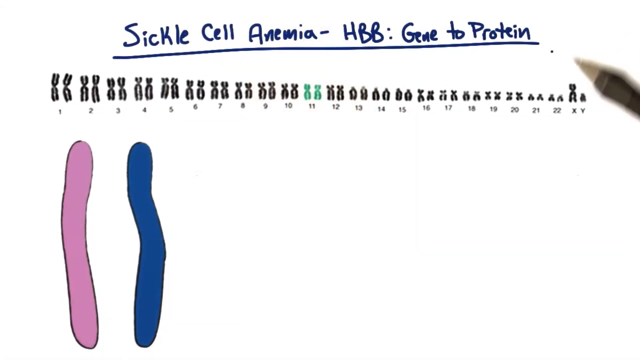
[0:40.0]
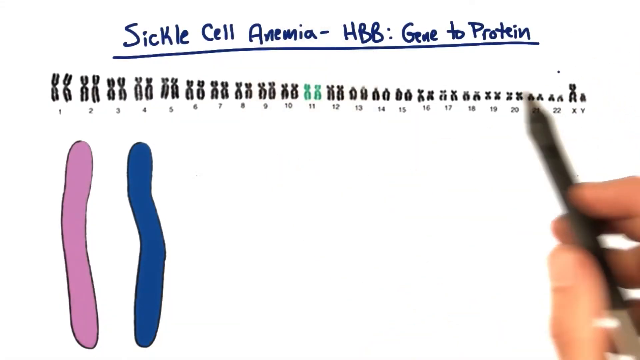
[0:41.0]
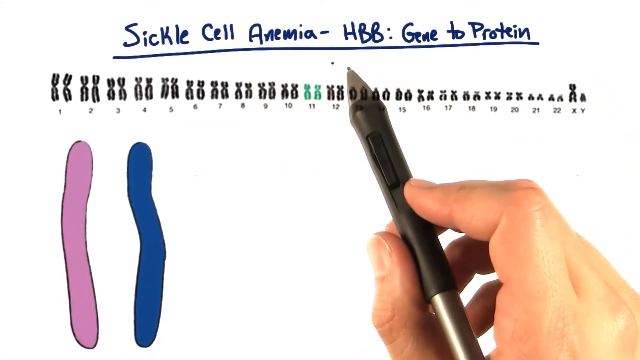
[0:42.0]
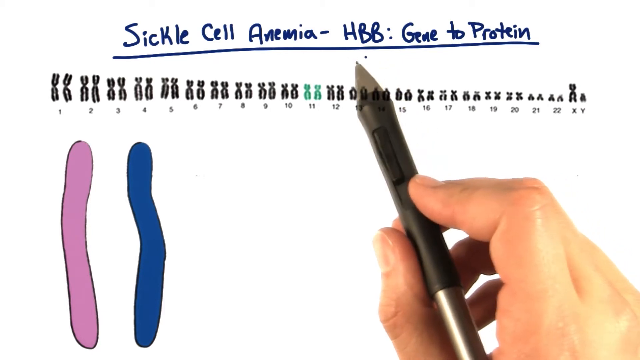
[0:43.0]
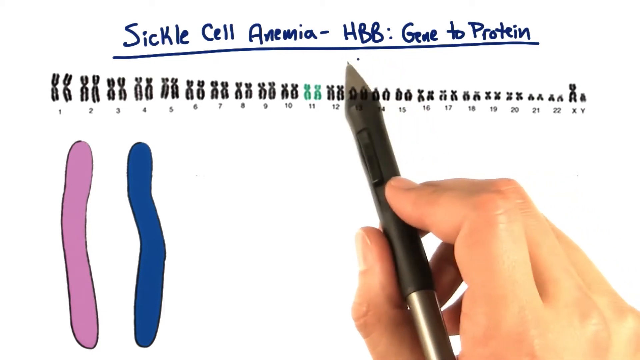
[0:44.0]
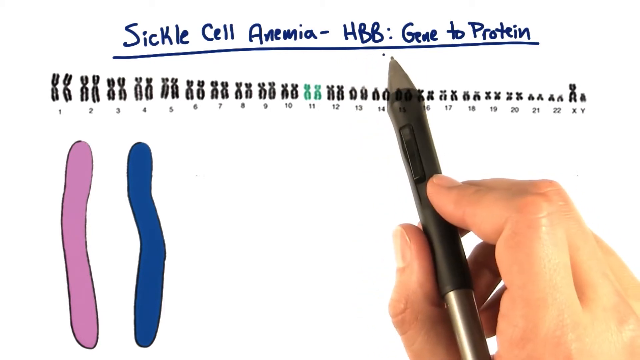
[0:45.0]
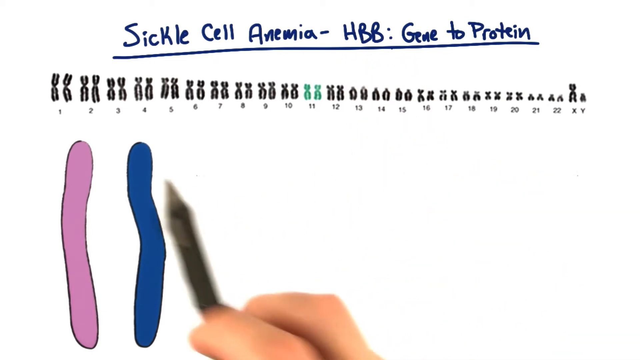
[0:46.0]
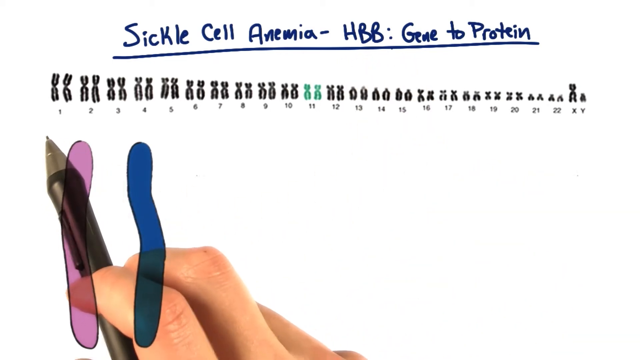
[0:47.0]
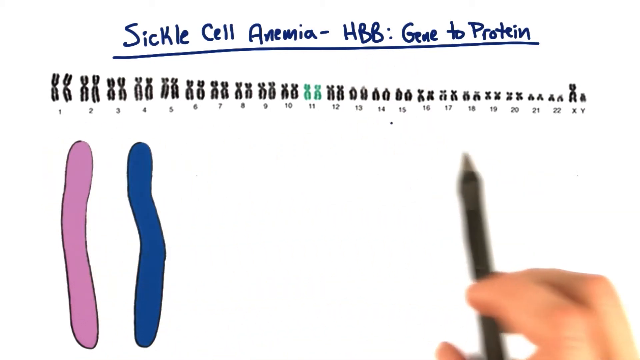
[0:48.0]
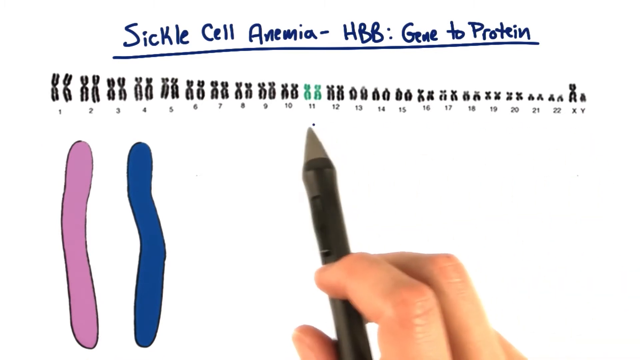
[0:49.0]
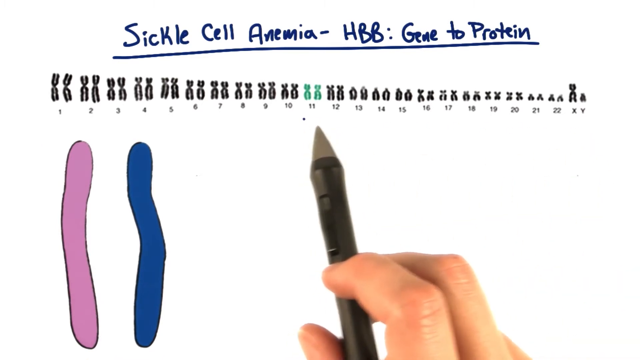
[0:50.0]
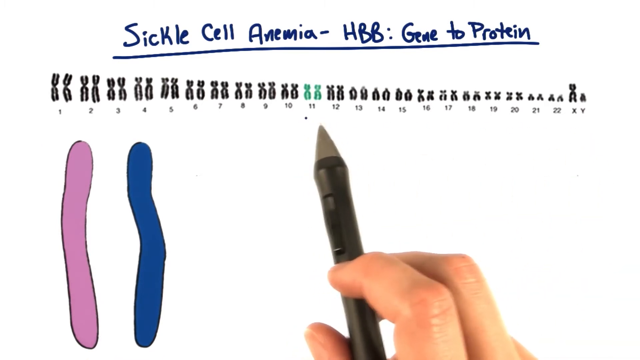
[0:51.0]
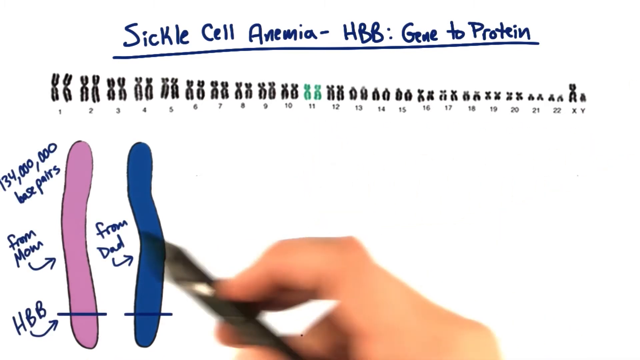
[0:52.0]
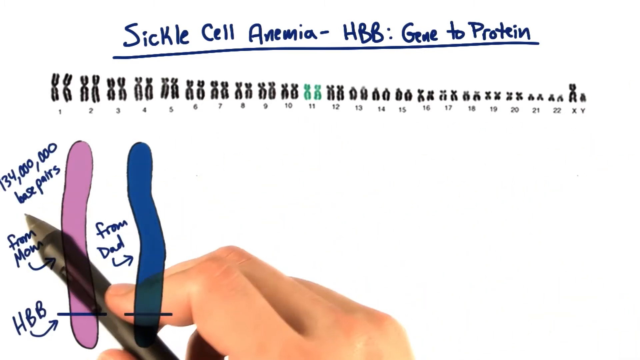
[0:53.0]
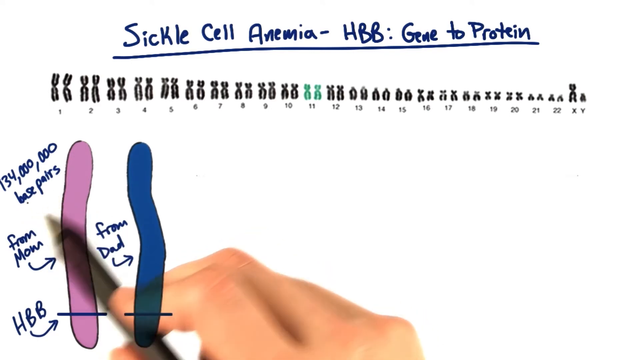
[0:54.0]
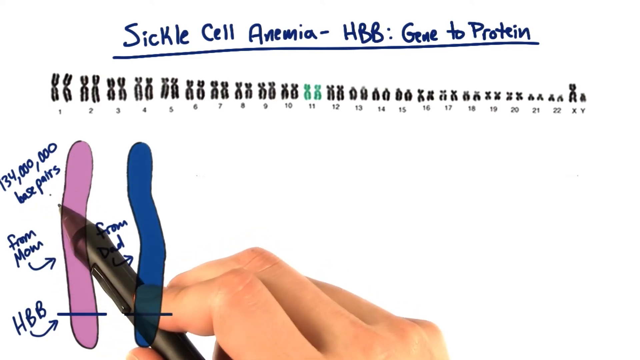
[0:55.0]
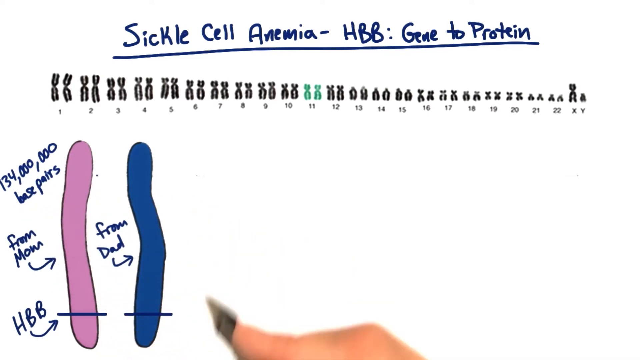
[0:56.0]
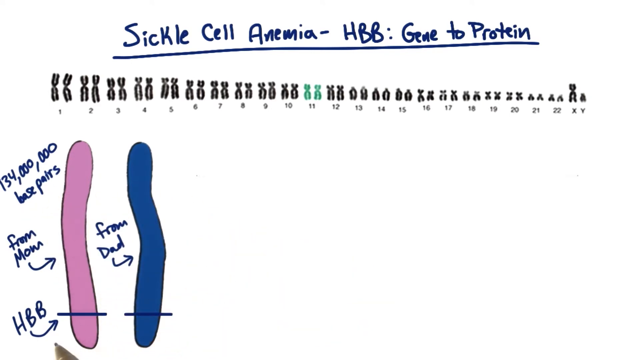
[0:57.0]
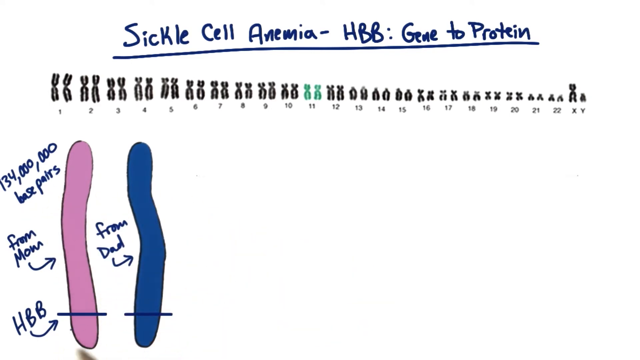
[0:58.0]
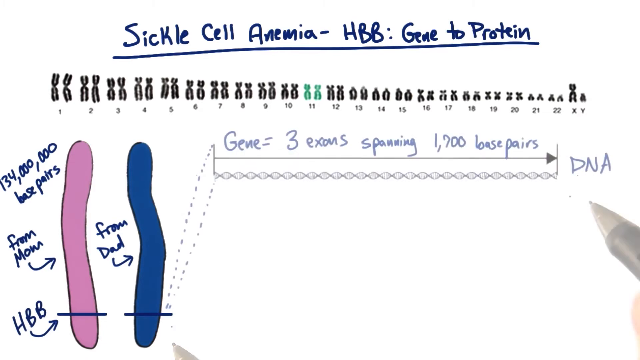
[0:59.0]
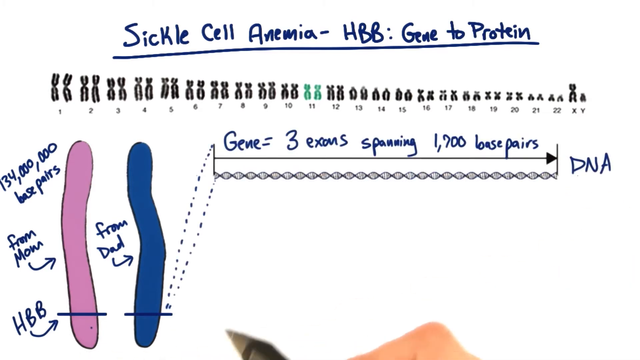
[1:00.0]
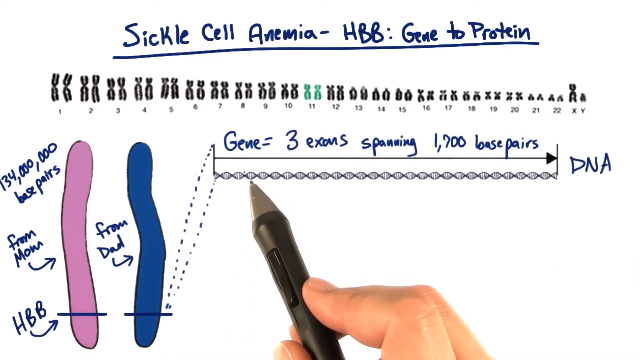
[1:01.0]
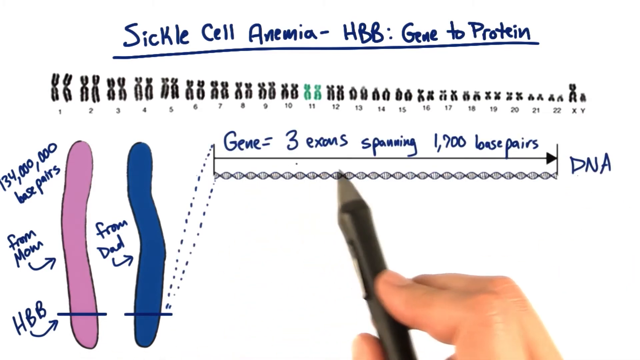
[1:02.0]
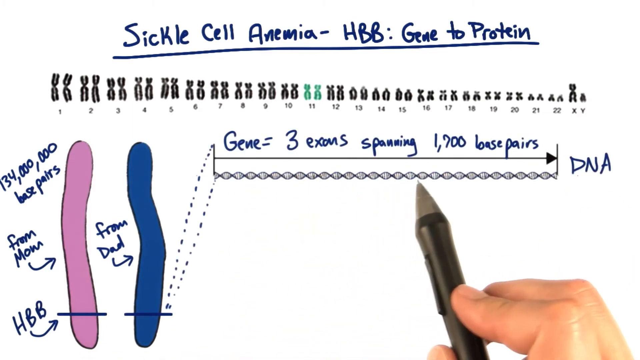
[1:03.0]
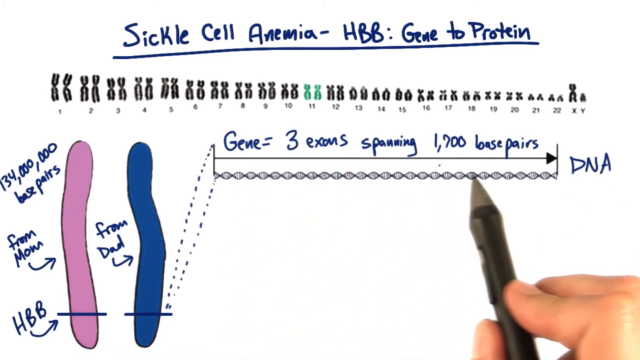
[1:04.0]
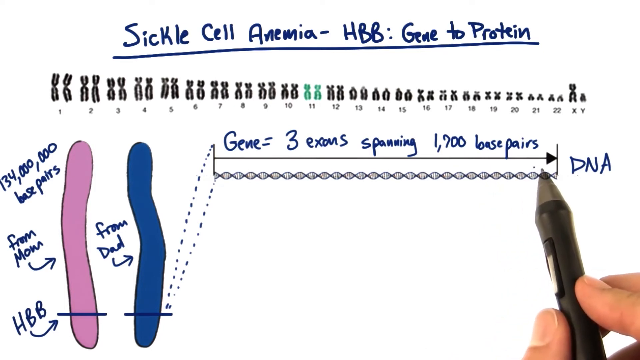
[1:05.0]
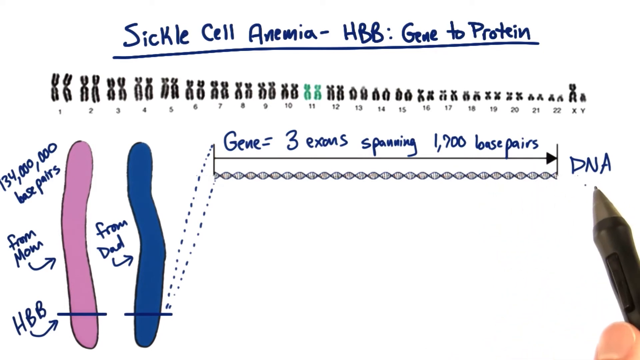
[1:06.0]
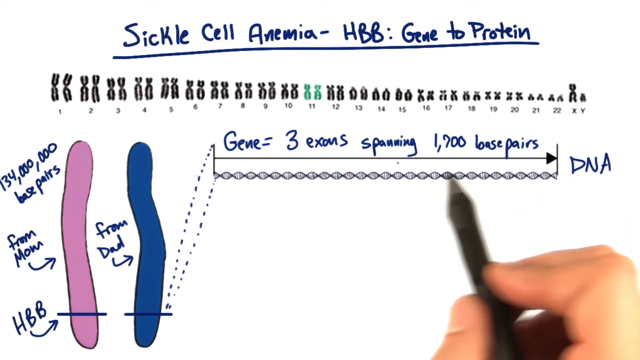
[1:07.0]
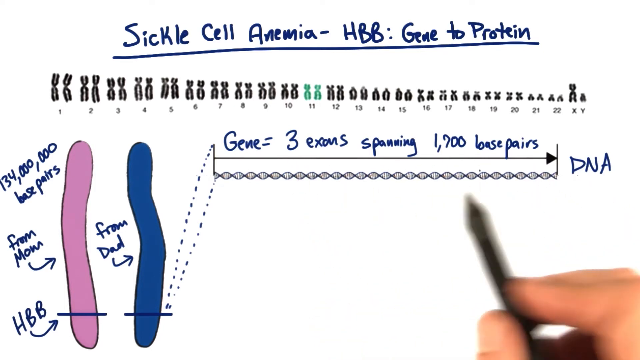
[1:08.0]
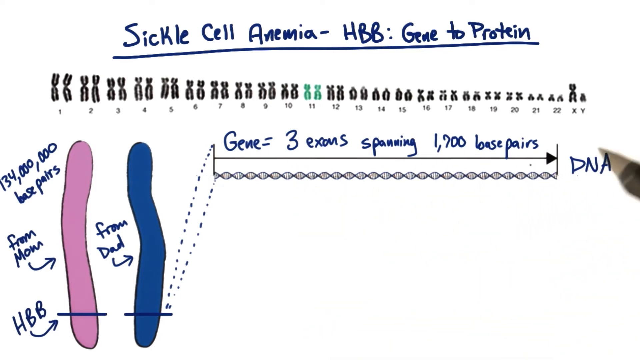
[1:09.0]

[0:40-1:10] The next slide appears, titled "sickle cell anemia - HBB gene to protein" in blue handwriting and underlined. It has a drawing of the human chromosome pairs up to 22, plus drawings of the X and Y chromosomes. The host's right hand is visible, holding a digital pen. On the left side of the image are two strands next to each other, one purple and one blue. The host points at the title and underlines HBB, then underlines the whole row of chromosome pairs below the title, and focuses on chromosome 11, which is green while the rest of the chromosomes are black. Labels then appear on the strands: the purple strand reads "134 million base pairs," the purple strand is from mom, and the blue strand is from dad. An arrow points to the strands, and at their bottom a blue line cuts through the tip, labeled "HBB." The host hovers over the base pairs section and the HBB sections of both strands. He draws what looks like a dotted or dashed line, labeled "gene = three exons spanning 1,700 base pairs," and below that is a DNA molecule sequence. At the far right of the arrow is the label "DNA." He hovers his pen back and forth over the line a few times, then places the pen tip on DNA.